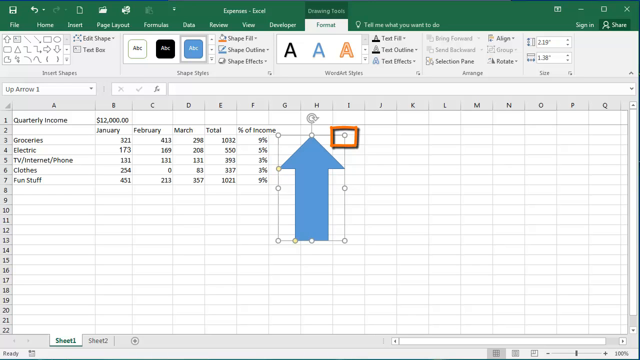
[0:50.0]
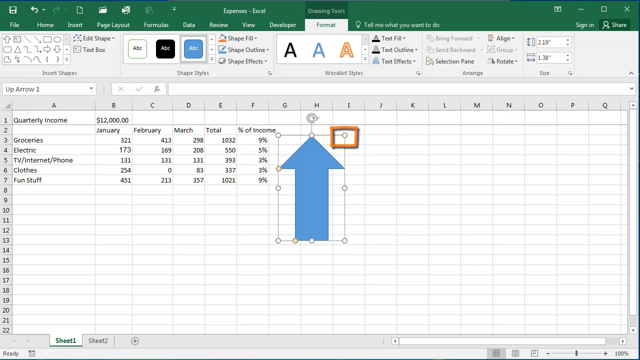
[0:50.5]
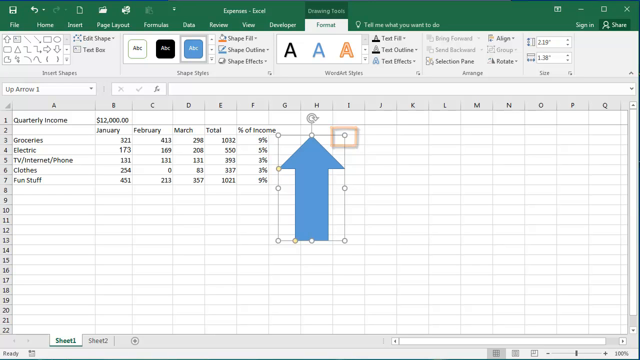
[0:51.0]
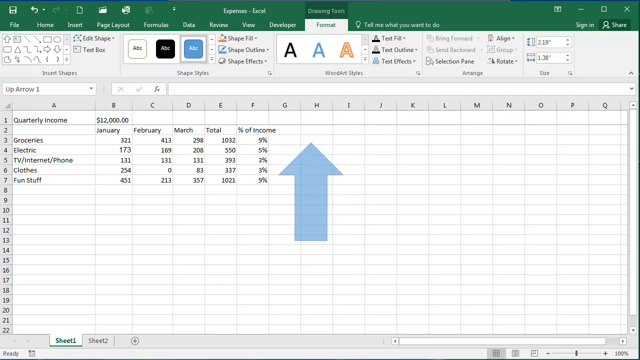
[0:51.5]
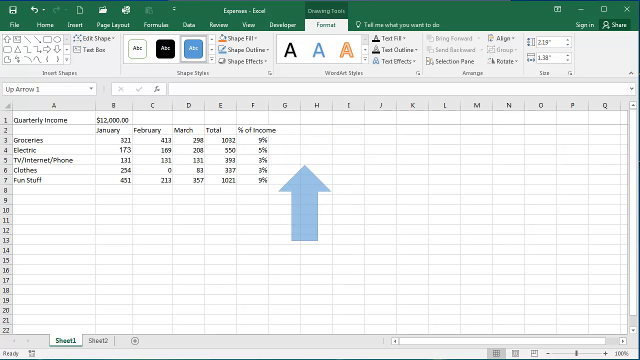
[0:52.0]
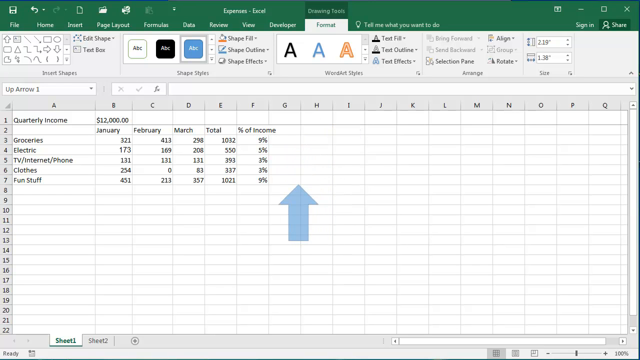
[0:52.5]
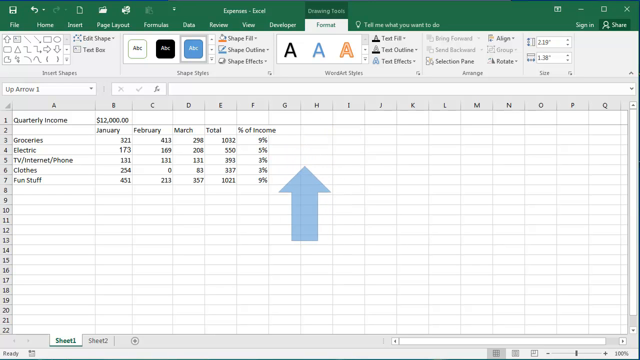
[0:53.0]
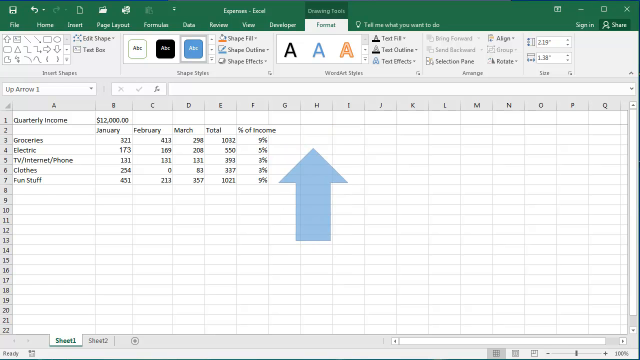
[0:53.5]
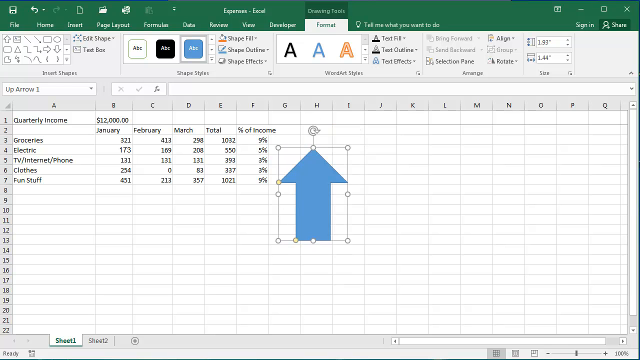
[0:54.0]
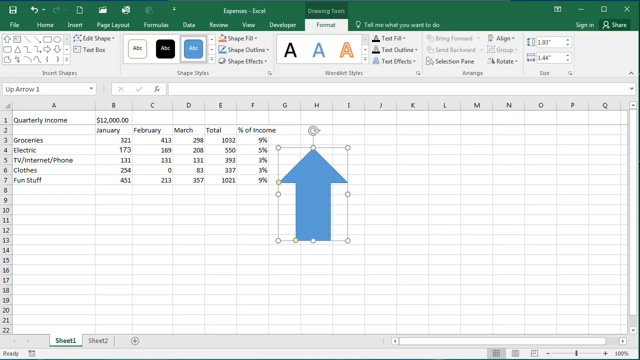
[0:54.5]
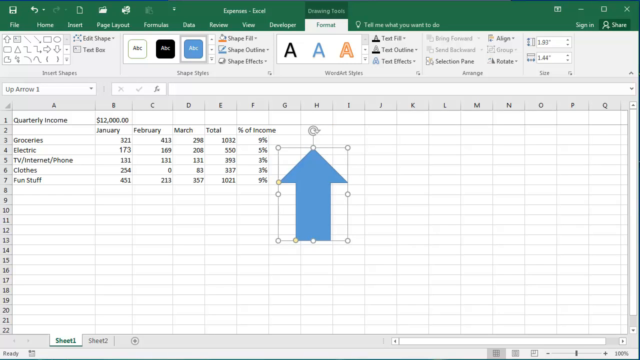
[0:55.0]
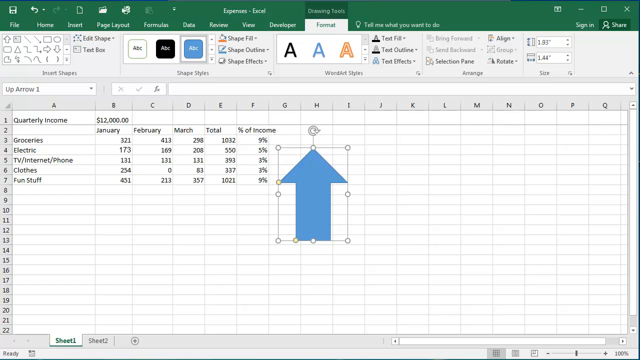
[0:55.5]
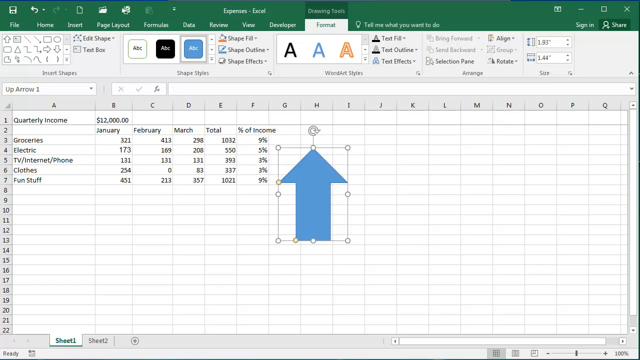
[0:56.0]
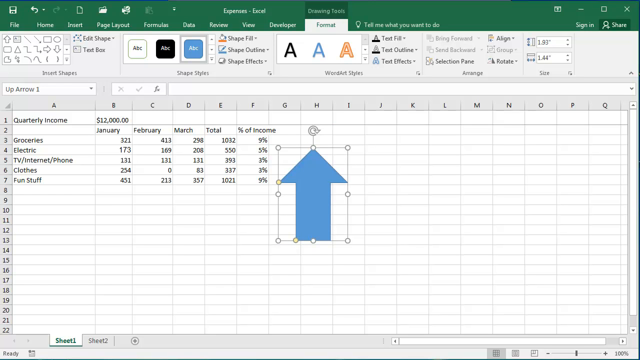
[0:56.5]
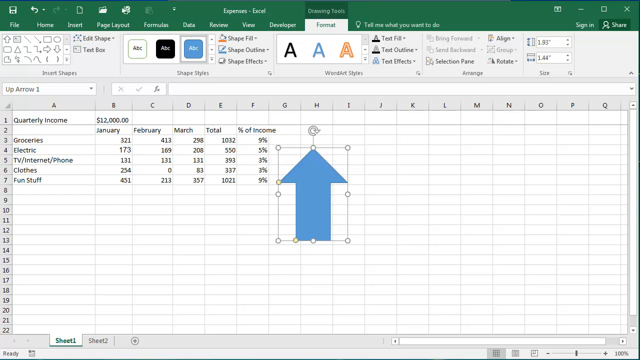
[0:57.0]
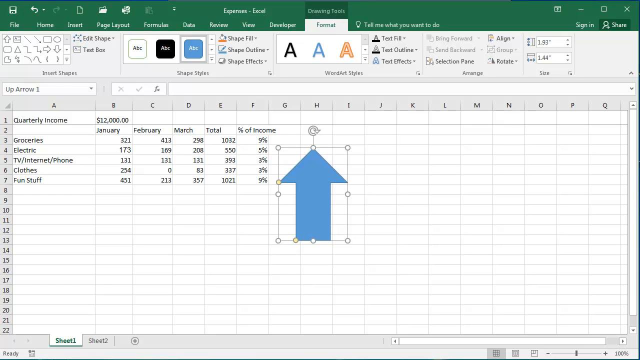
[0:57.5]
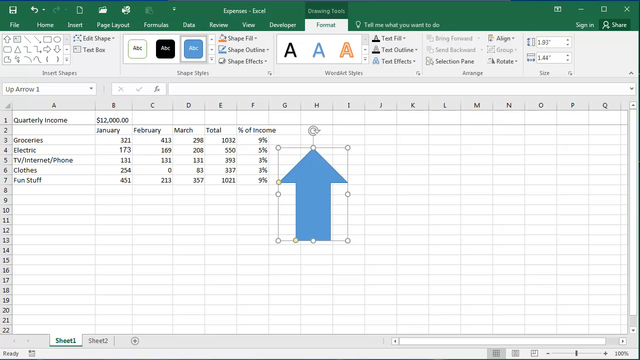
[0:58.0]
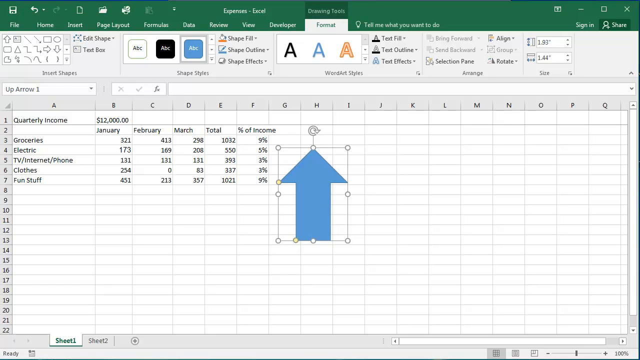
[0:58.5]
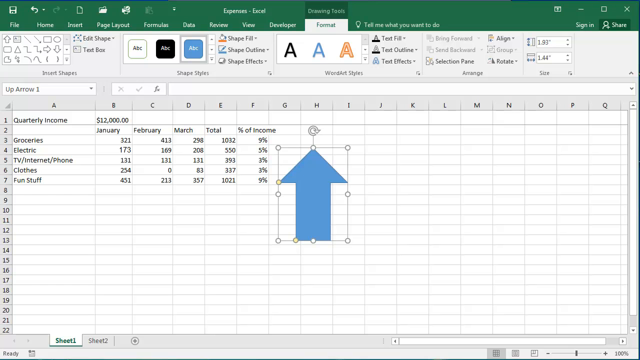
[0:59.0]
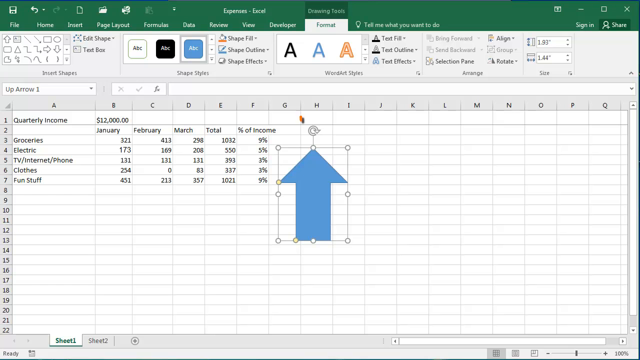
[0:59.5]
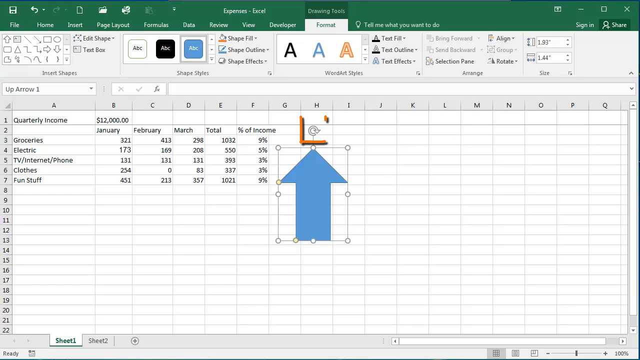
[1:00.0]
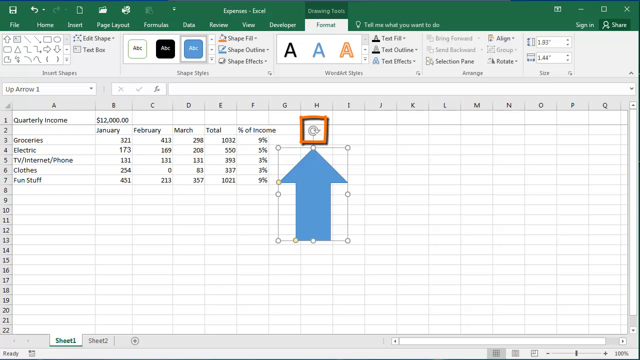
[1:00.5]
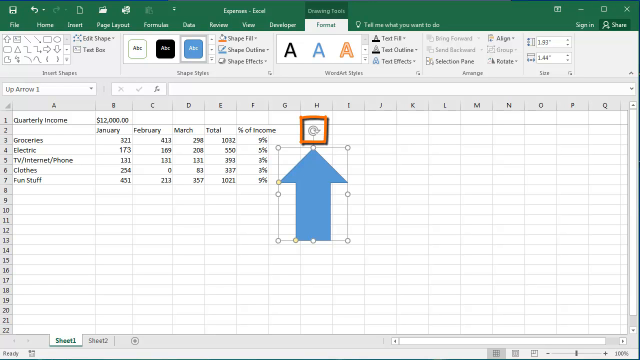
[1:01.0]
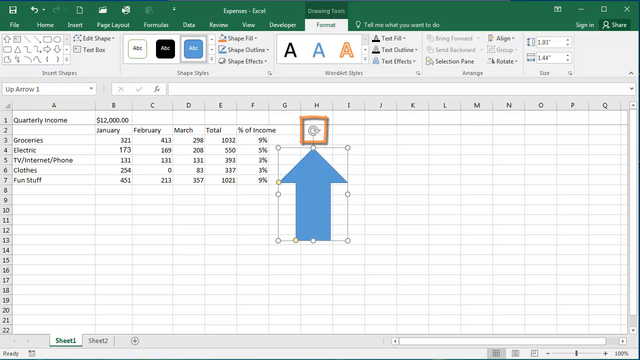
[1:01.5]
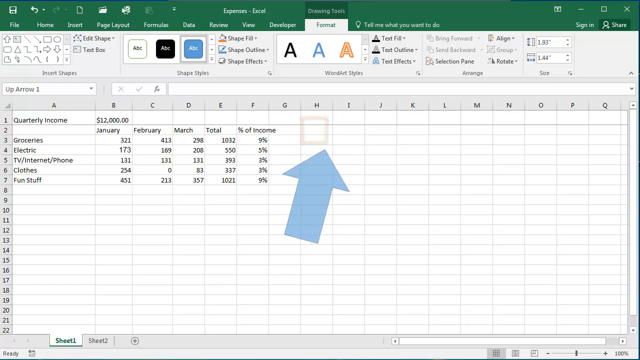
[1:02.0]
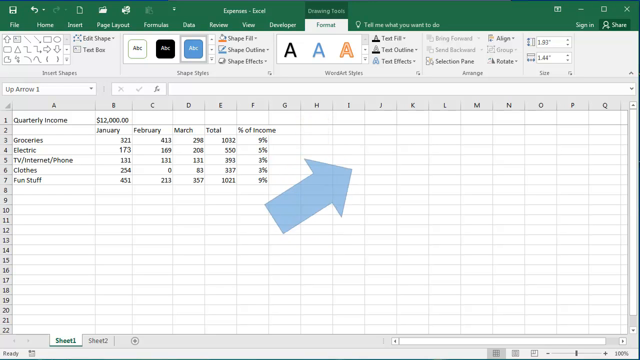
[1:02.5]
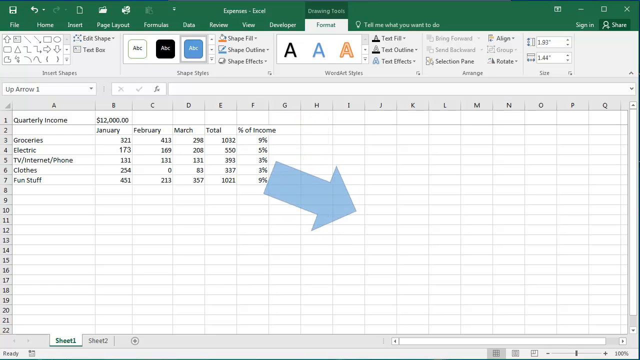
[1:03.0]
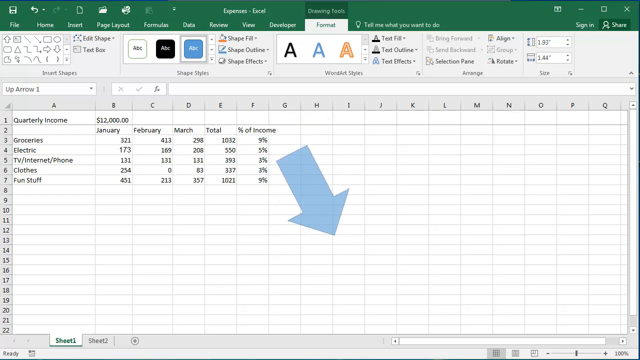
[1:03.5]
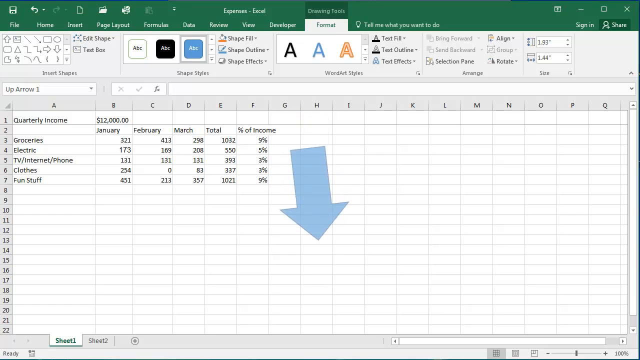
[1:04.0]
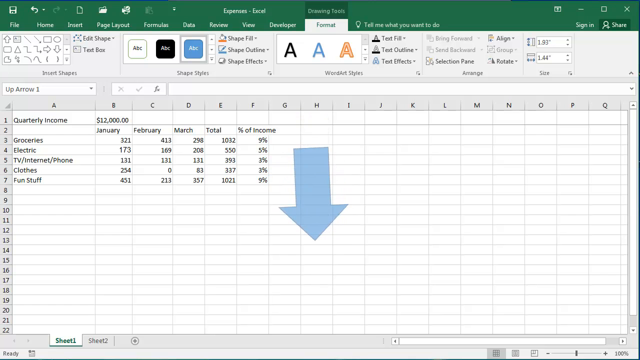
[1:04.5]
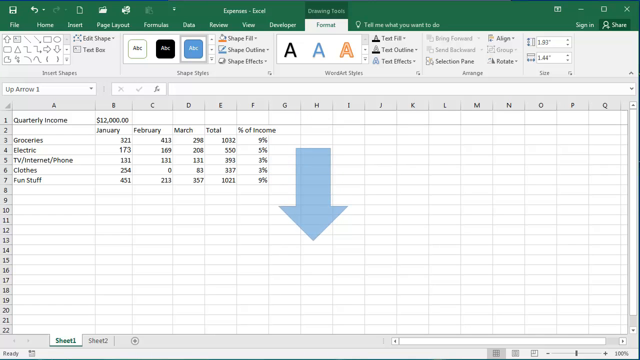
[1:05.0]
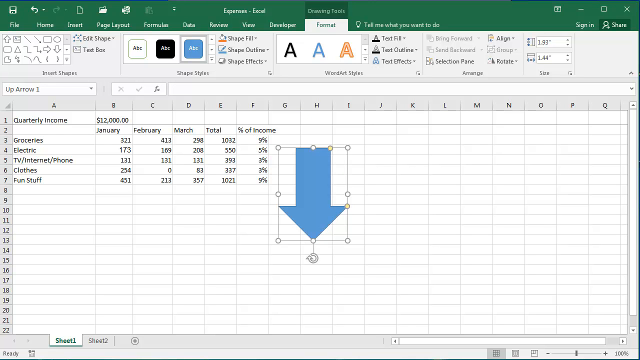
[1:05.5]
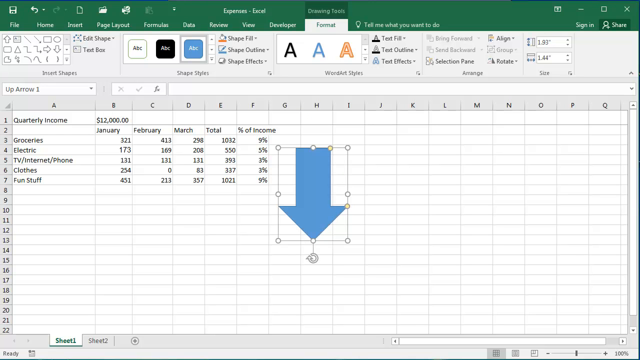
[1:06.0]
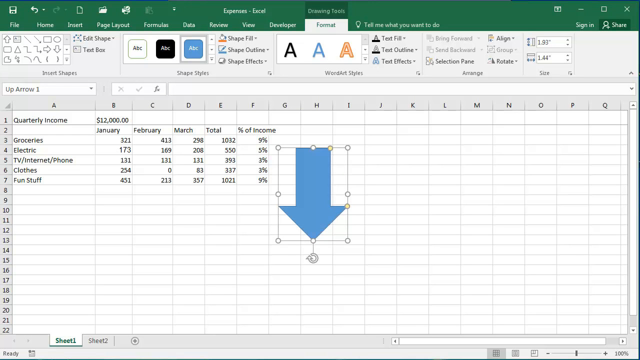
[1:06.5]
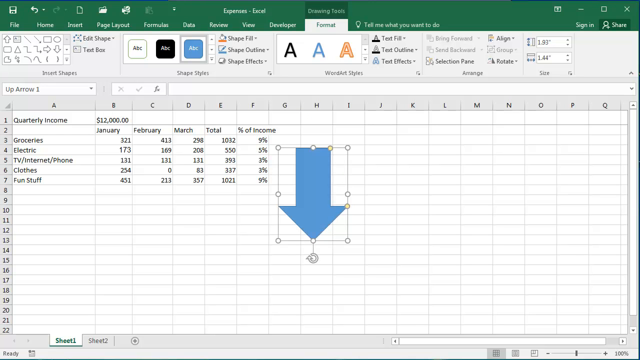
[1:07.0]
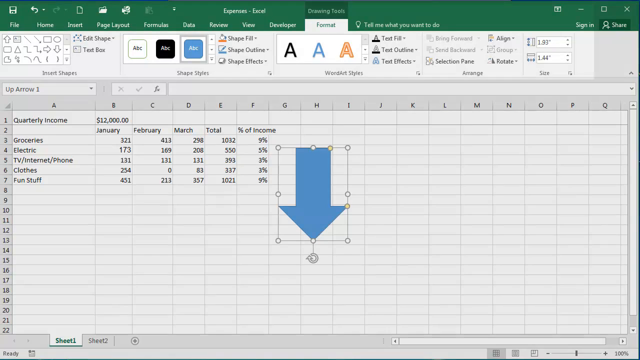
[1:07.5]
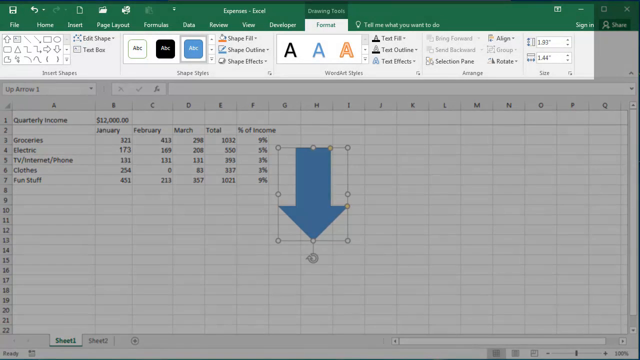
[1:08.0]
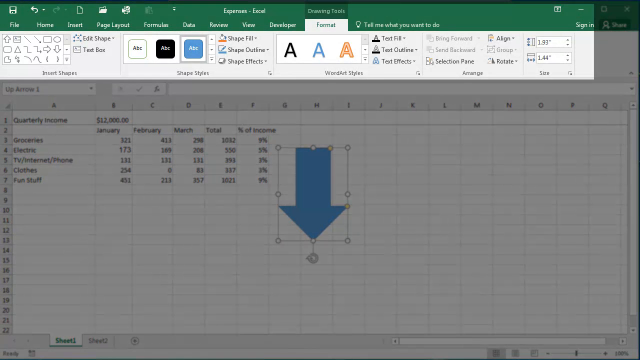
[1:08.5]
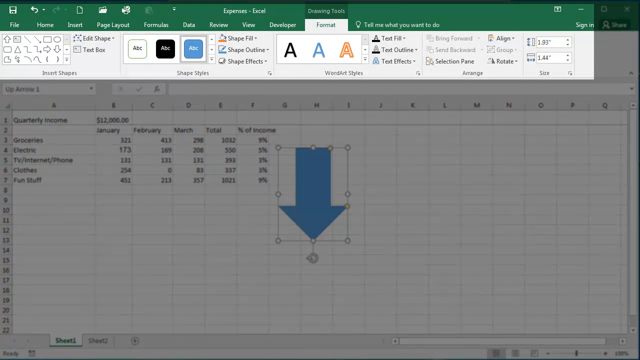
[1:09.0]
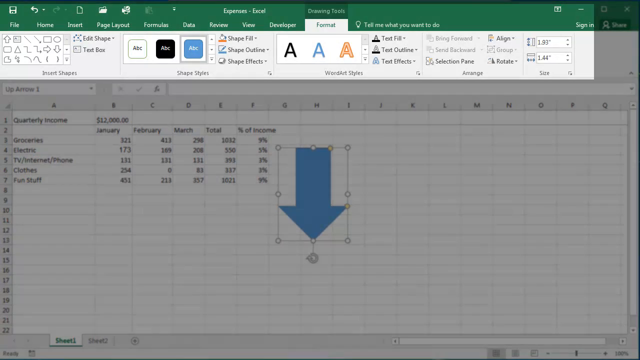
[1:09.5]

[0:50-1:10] On the Excel spreadsheet, a gigantic blue arrow is in columns G and H, and a small red square is in column I, rows 2 and 3. The blue arrow has a transformation box around it with lots of little circles that can be pulled to transform it, and a little rotation circle arrow is above the blue box. To the left of the arrow are columns of information. Column A lists "quarterly income," "groceries," "electric," "TV, internet, and phone," "clothes" and "fun stuff." Column B shows 12,000, "January," 321, 173, 131, 254 and 451. Column C shows "February," 413, 169, 131, 0 and 213. Column D shows "March," 298, 208, 131, 83 and 357. Column E shows "total," 1032, 553, 93, 337 and 1021. Column F shows "percent of income," 9%, 5%, 3%, 3% and 9%. Many Excel menu items run across the top. The red box and the transformation box around the blue arrow disappear. The arrow turns transparent and starts to shrink, then gets bigger again, and the transformation box appears once again around it. A red box appears around the rotation icon above the arrow, and the blue arrow rotates 180 degrees, now pointing down, and the transformation box appears again. The whole screen then turns black with only the top menu part highlighted, and a mouse cursor goes through different options in the menu.